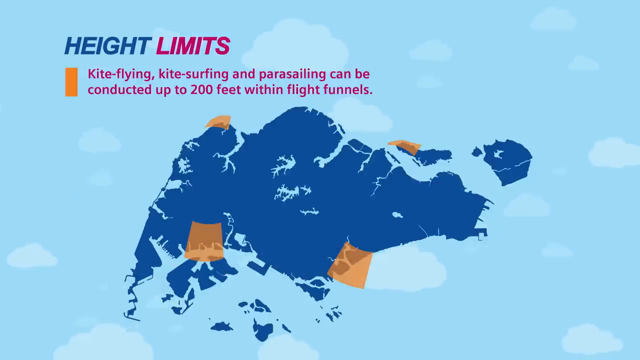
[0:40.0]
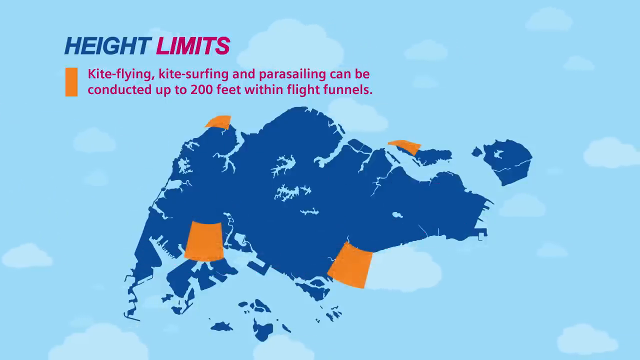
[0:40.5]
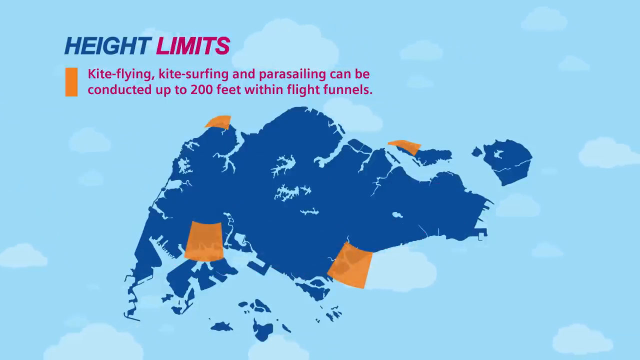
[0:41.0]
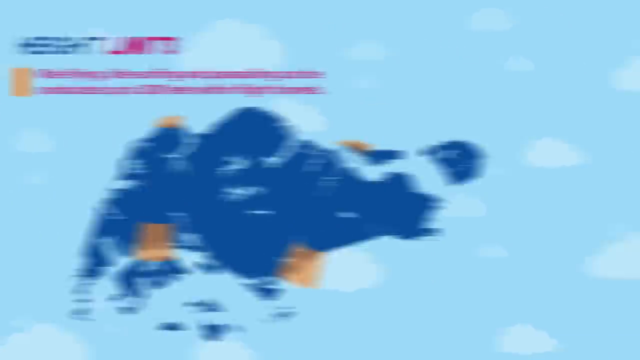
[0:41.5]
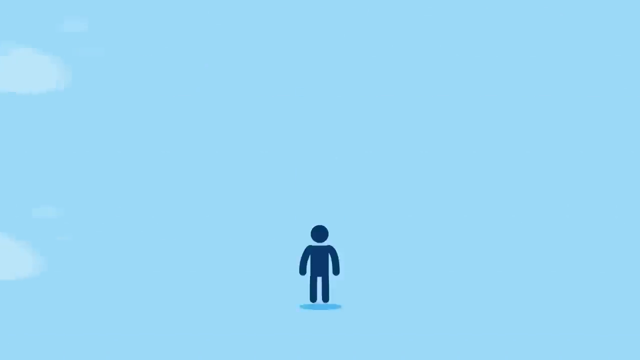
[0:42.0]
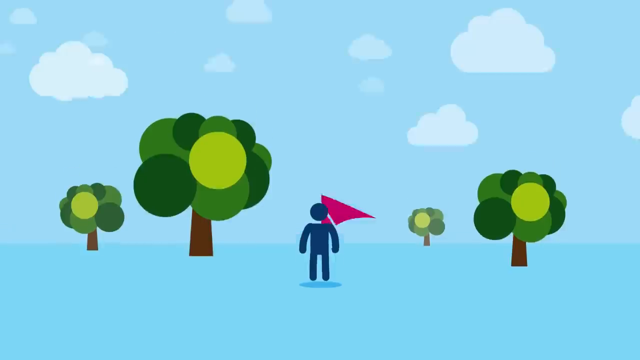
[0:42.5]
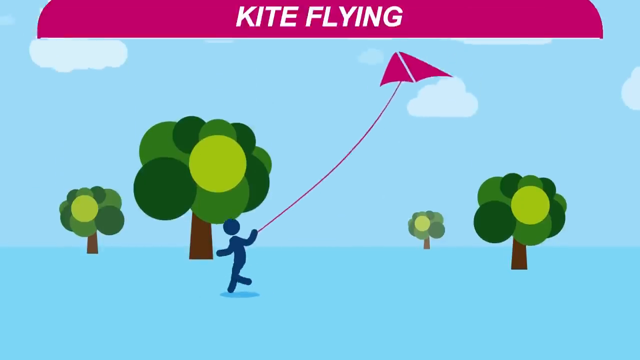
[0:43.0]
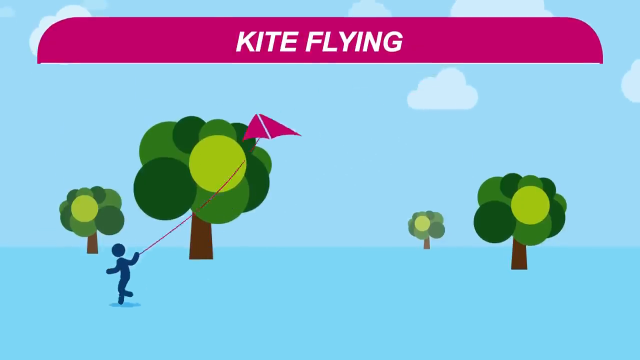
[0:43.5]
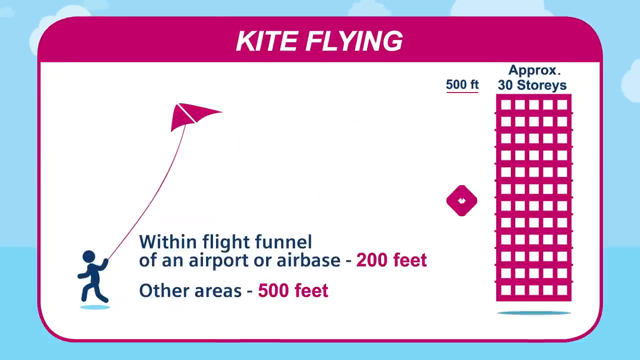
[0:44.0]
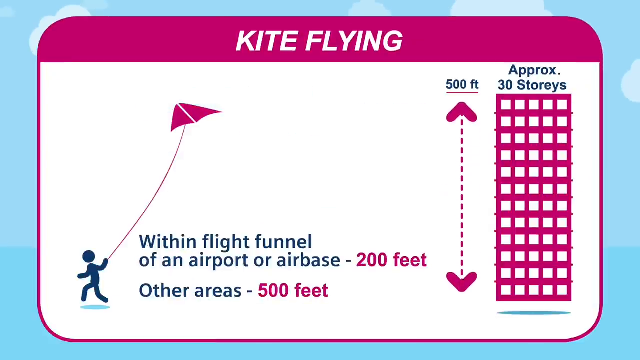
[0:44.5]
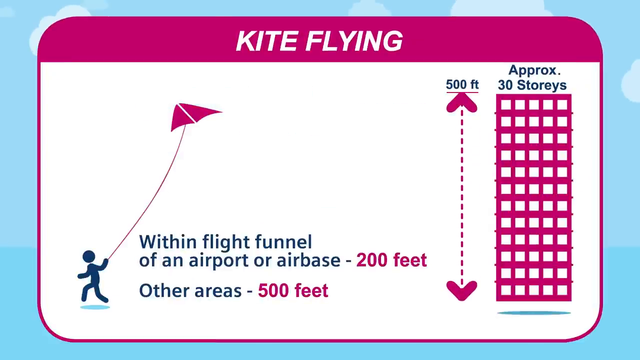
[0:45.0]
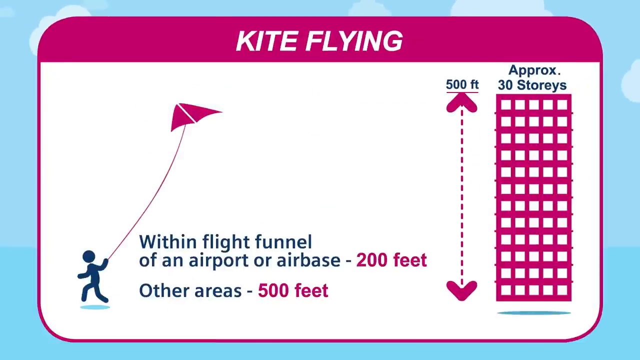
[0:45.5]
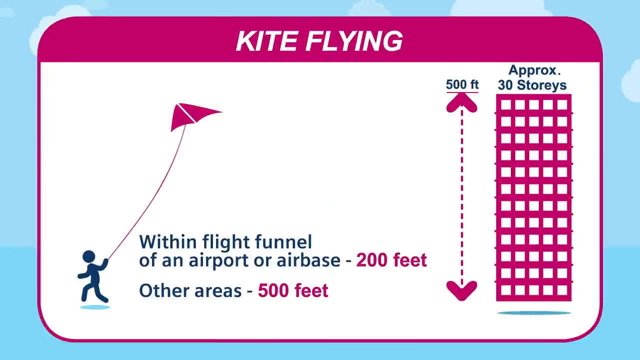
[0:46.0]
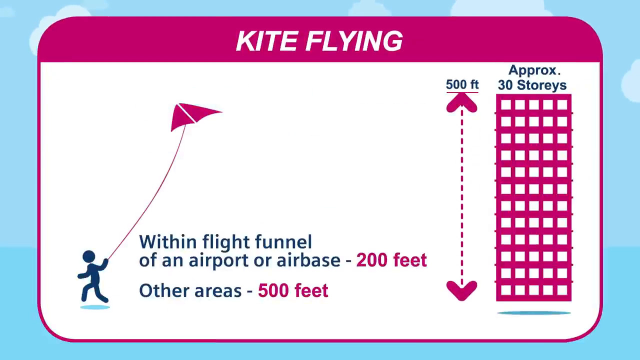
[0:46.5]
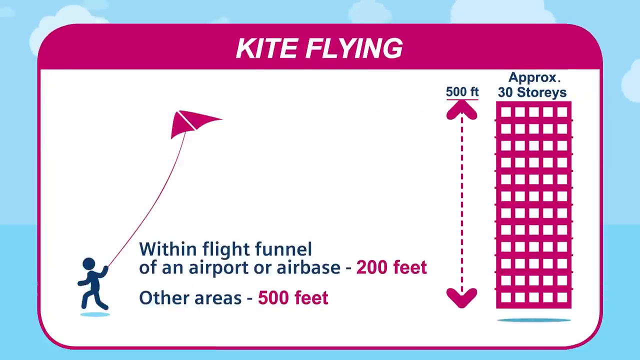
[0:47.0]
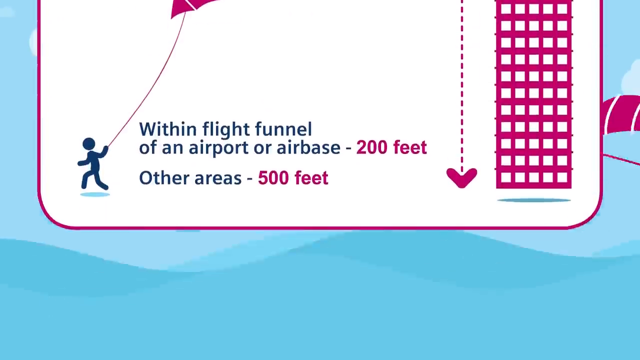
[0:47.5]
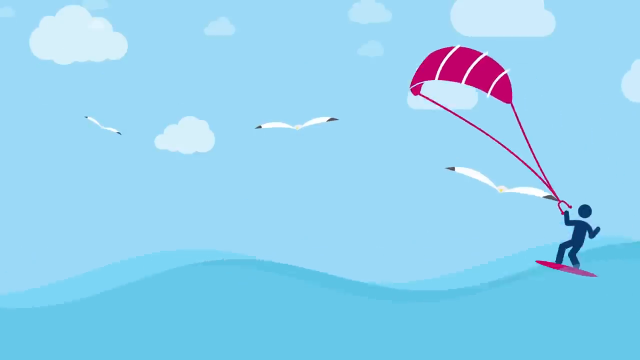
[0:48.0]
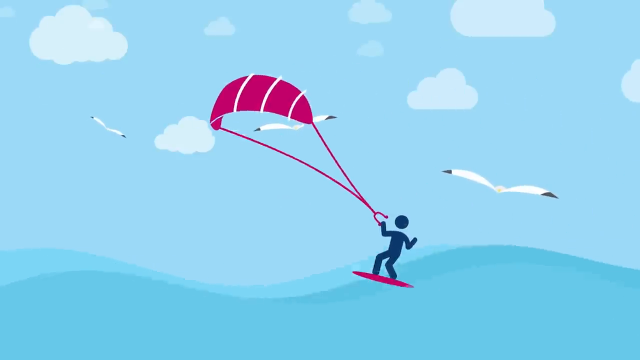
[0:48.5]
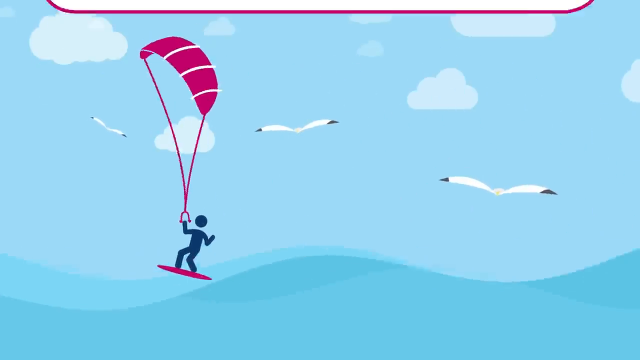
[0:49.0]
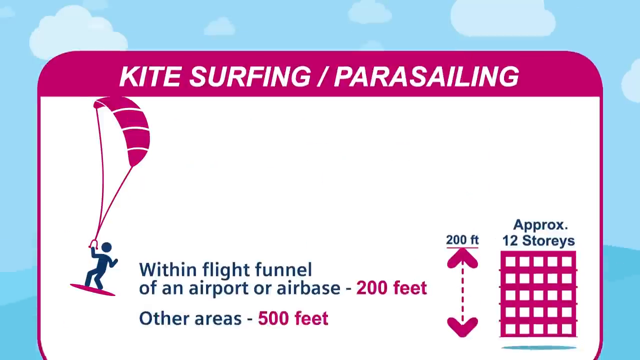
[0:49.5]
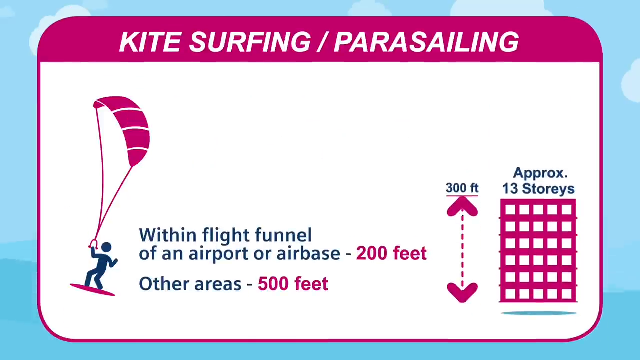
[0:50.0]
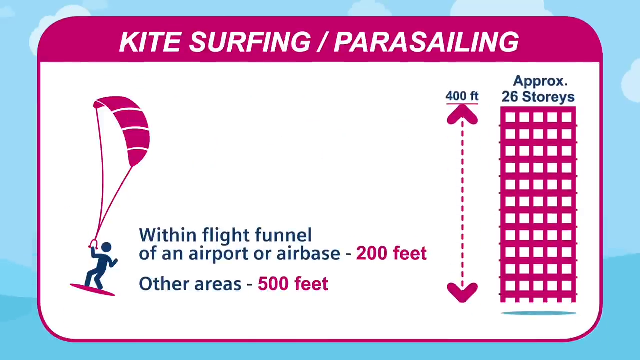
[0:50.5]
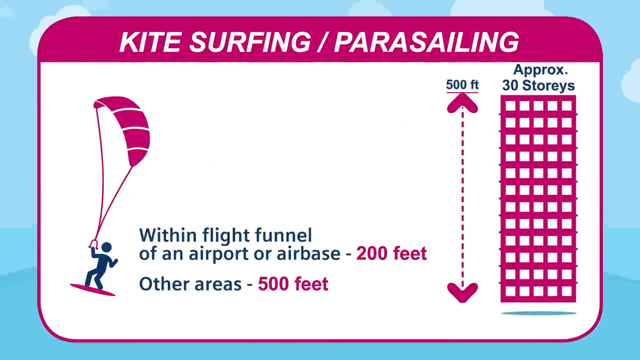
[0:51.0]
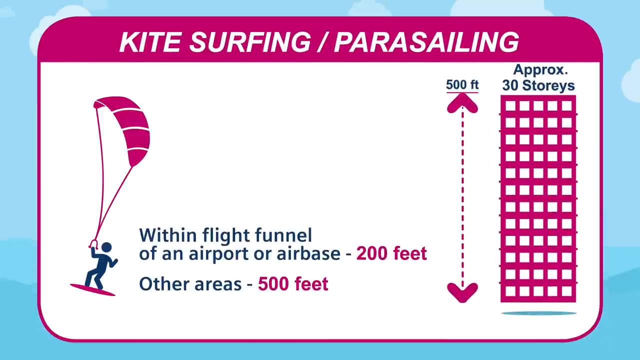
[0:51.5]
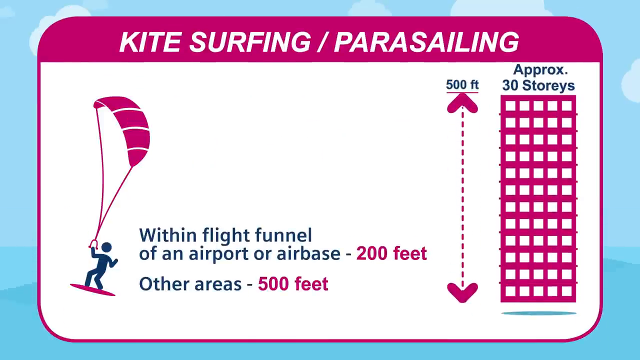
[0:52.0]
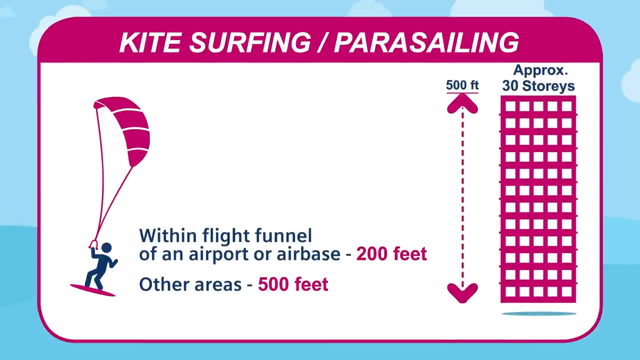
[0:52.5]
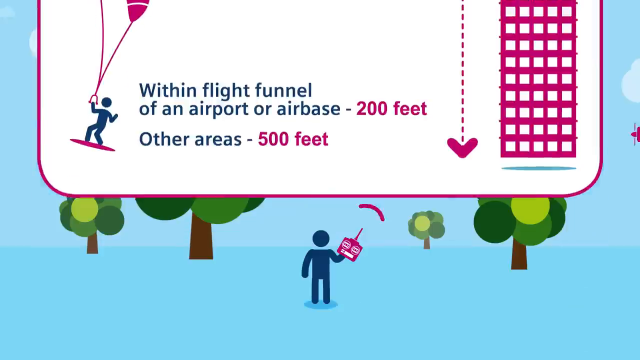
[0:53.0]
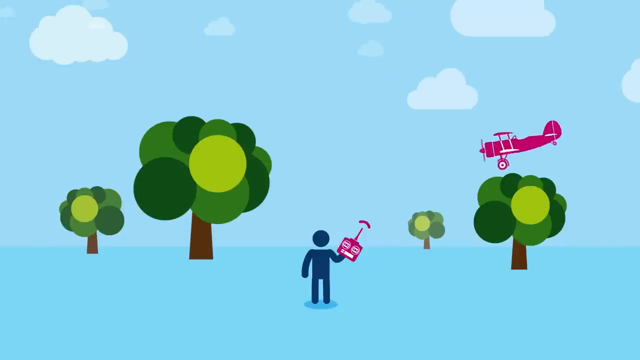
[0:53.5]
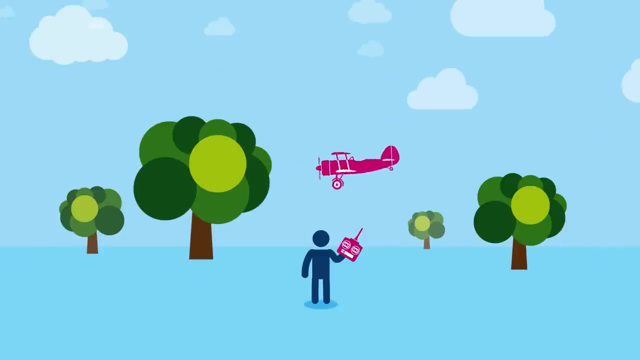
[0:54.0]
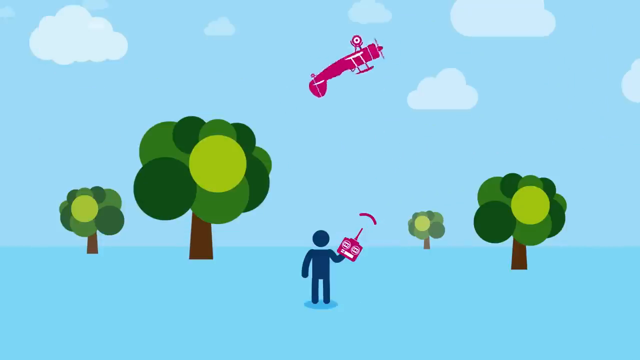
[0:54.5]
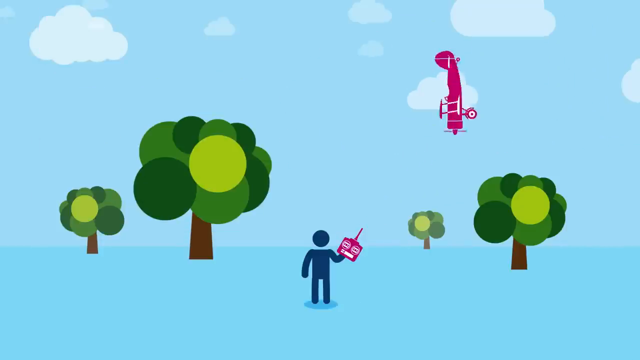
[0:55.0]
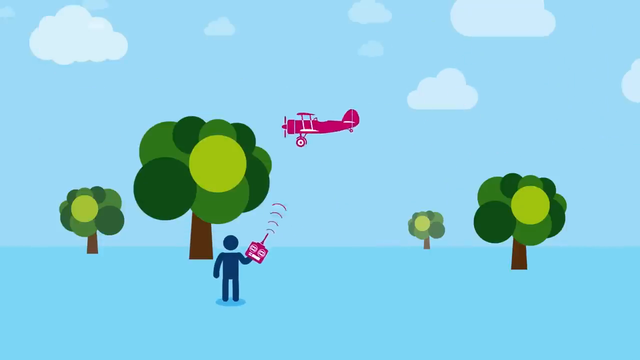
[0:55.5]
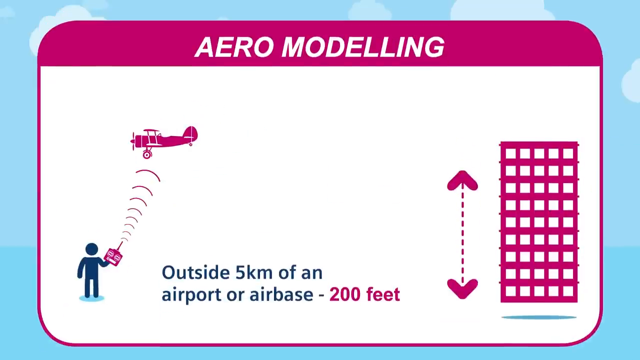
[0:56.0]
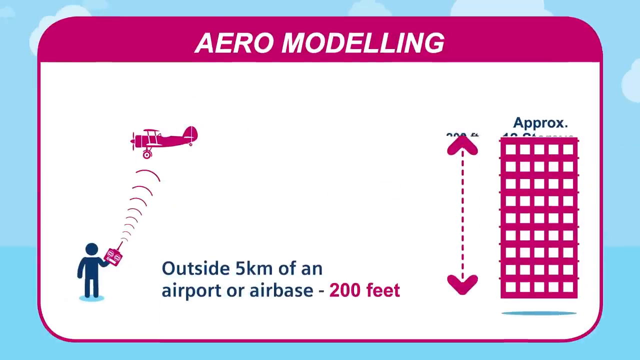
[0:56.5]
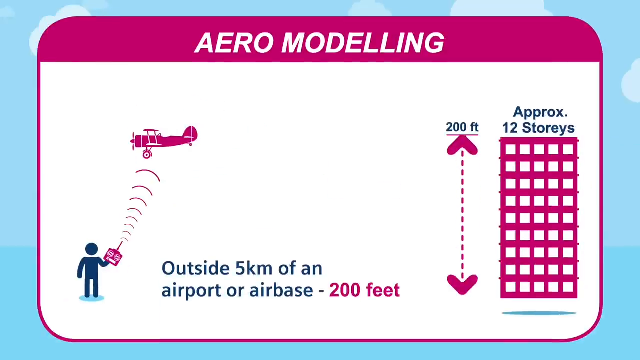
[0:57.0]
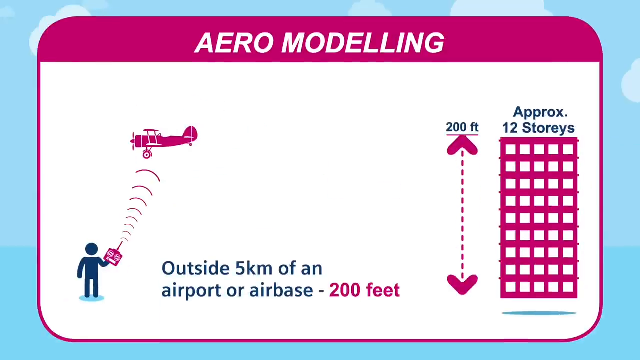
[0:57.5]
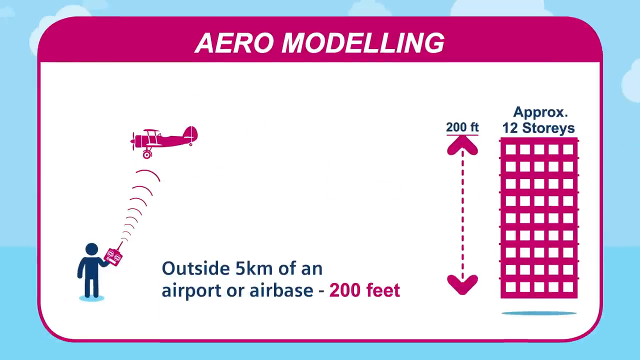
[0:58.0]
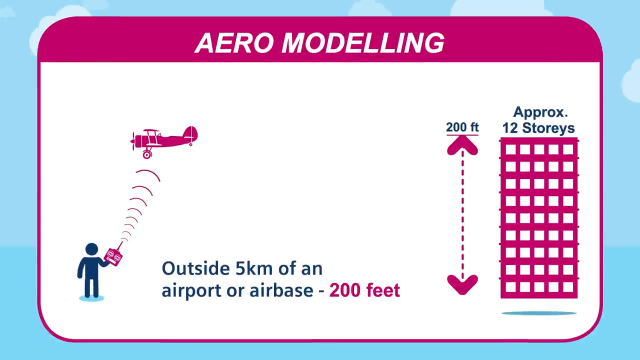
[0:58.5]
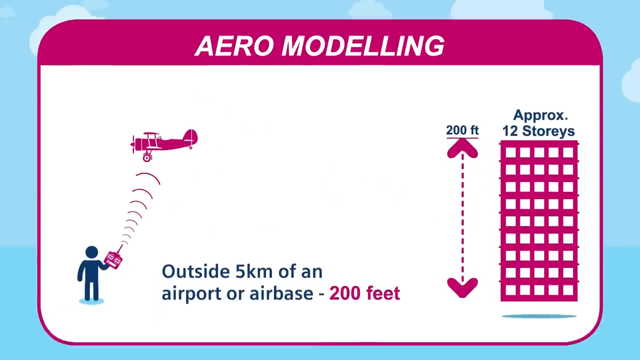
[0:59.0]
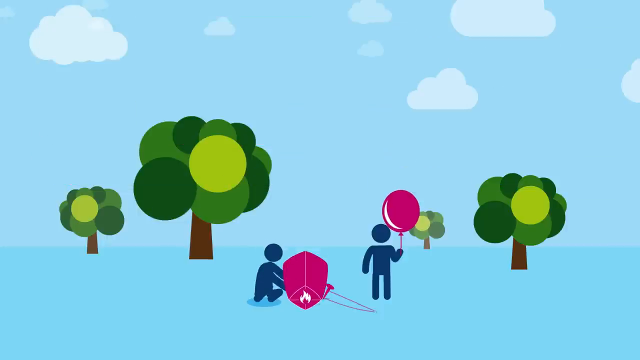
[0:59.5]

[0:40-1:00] The map of the limits is on screen. A boy then runs with a kite between trees under a blue sky with clouds. A box appears labeled as kite flying, with a message reading "within flight funnel of an airport or airbase 200 feet" and "other areas 500 feet". To illustrate 500 feet, a building of approximately 30 stories is shown with the distance marked next to it, and there is also a message saying "200 feet". Next, a boy surfs with a kite, labeled as kite surfing and parasailing, again with 200 feet and 500 feet. Then a boy holds a type of radio machine near an airplane, and it emits something like radio waves or signals. Text reads "below outside five kilometer of an airport or airbase 200 feet", and 200 feet is shown as approximately 12 stories. This section is labeled "aerial modeling". It ends with a boy in blue and a girl in pink throwing something into the air.